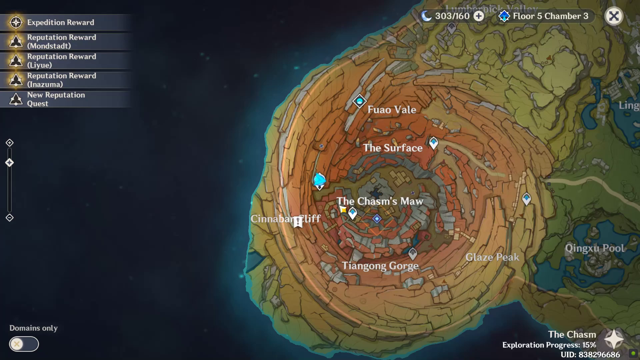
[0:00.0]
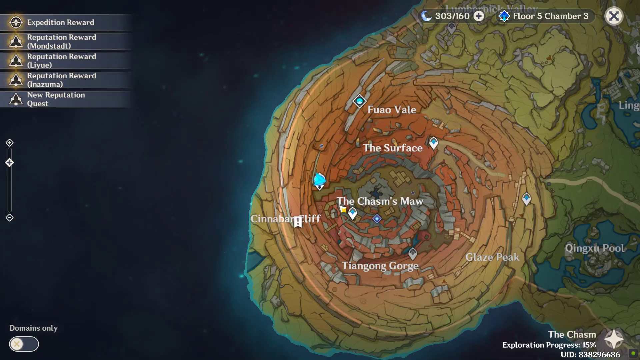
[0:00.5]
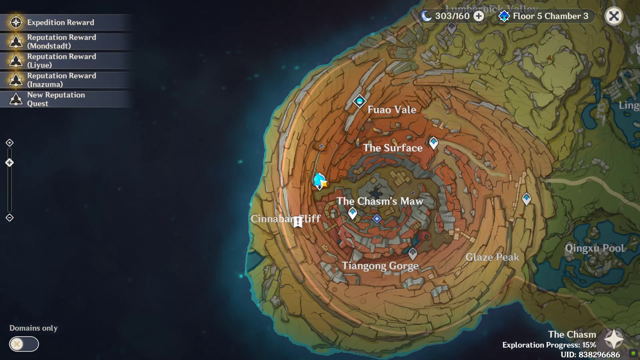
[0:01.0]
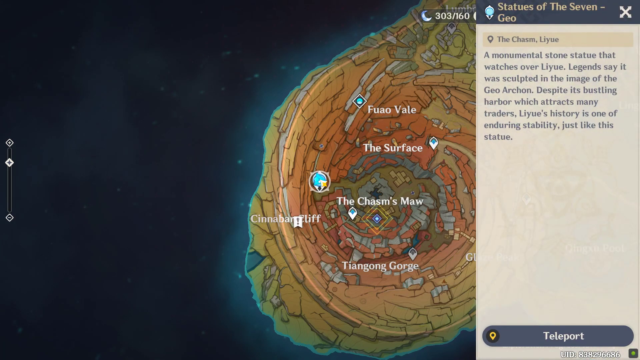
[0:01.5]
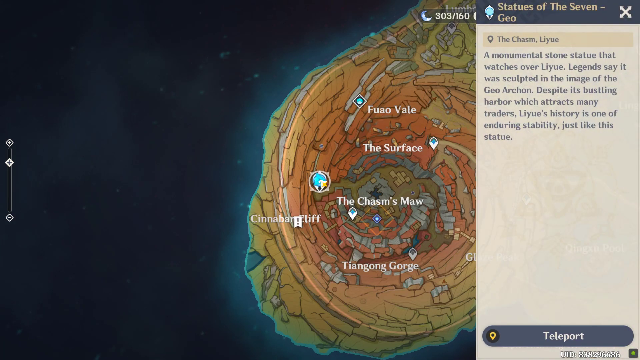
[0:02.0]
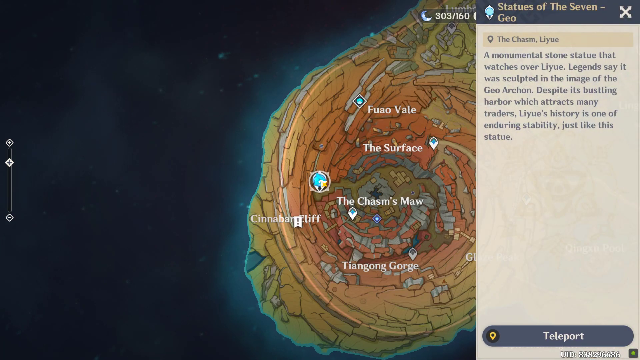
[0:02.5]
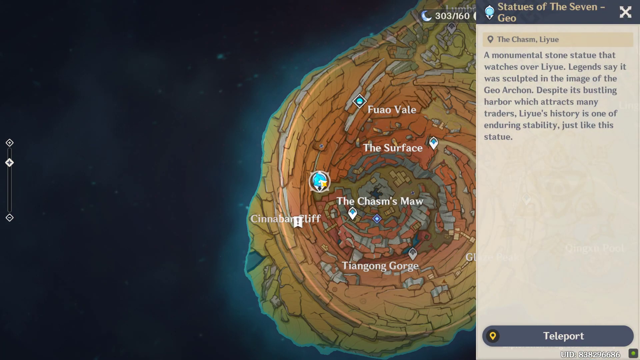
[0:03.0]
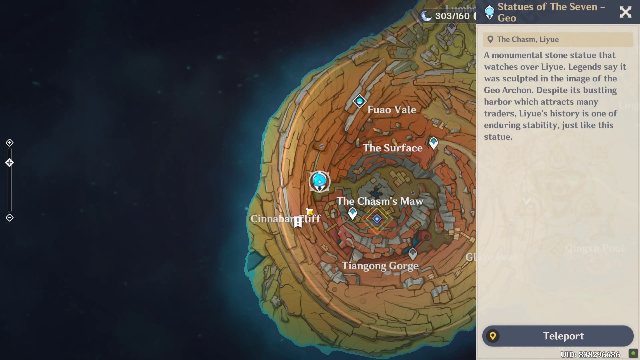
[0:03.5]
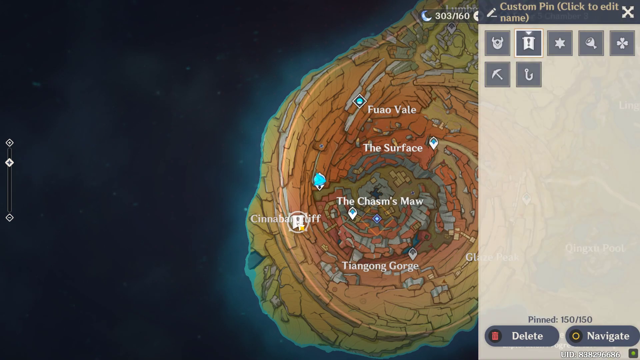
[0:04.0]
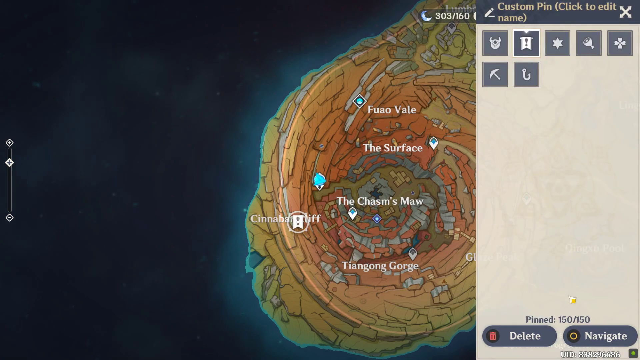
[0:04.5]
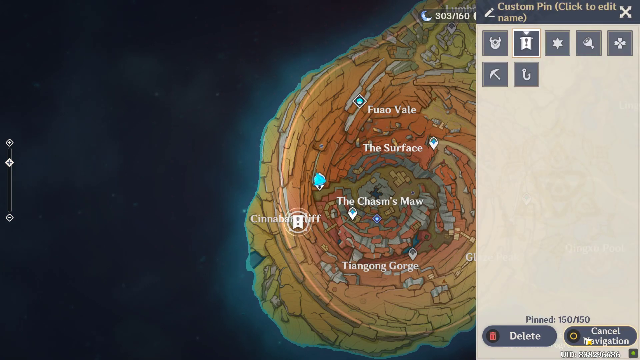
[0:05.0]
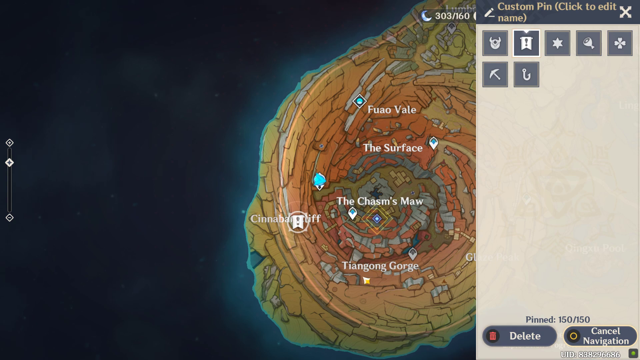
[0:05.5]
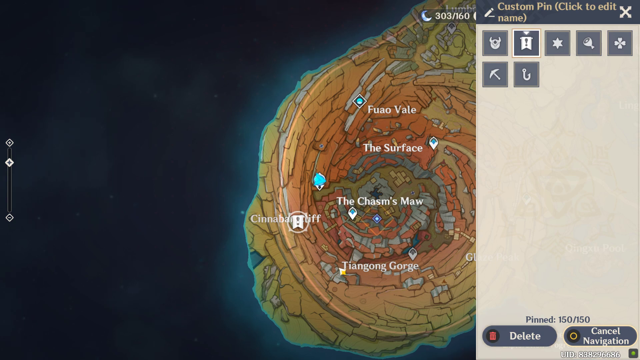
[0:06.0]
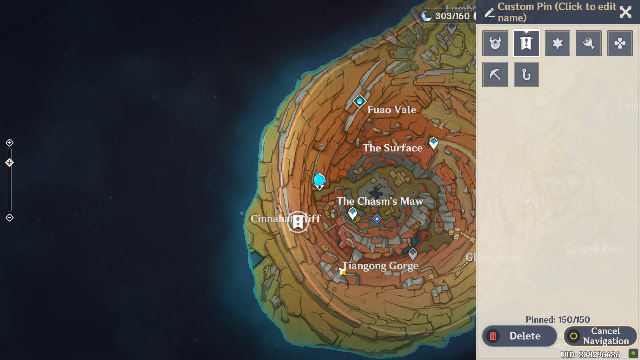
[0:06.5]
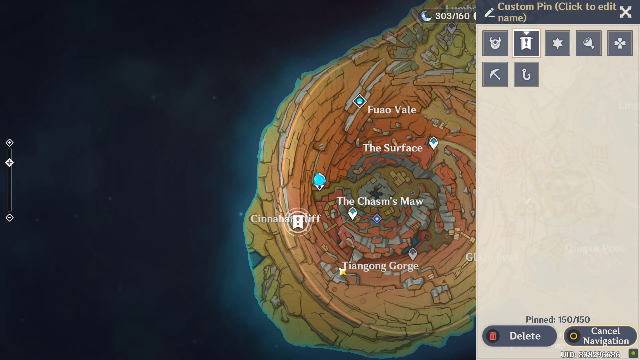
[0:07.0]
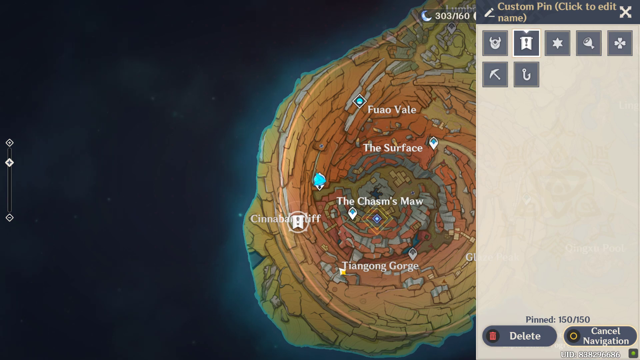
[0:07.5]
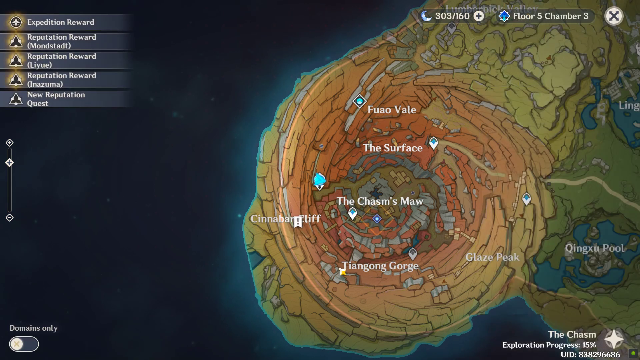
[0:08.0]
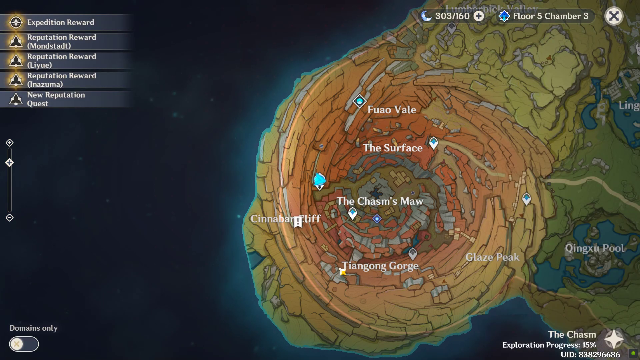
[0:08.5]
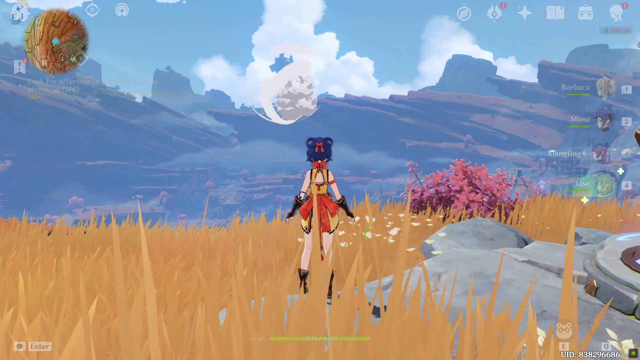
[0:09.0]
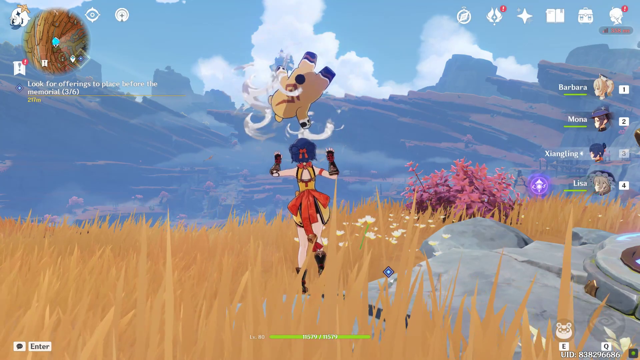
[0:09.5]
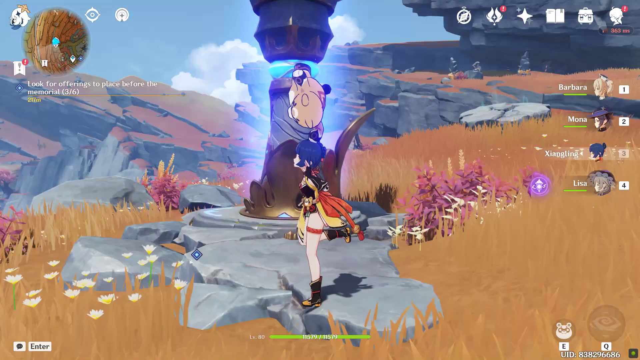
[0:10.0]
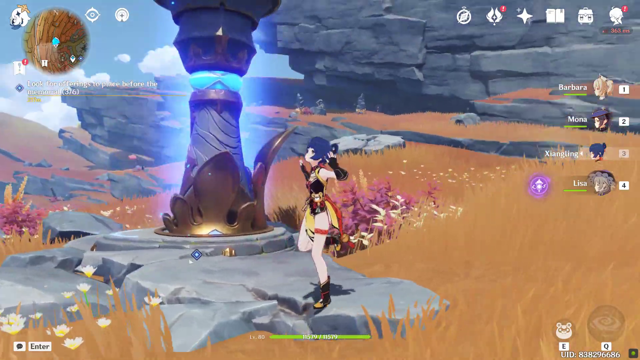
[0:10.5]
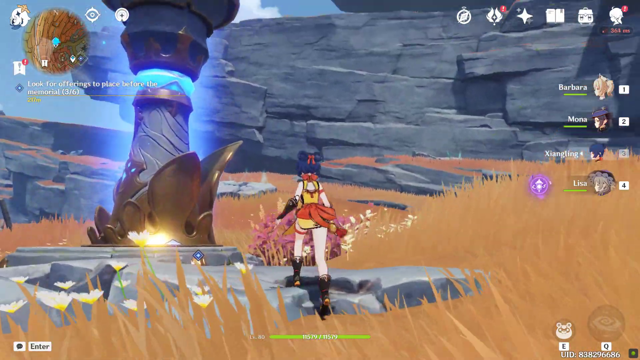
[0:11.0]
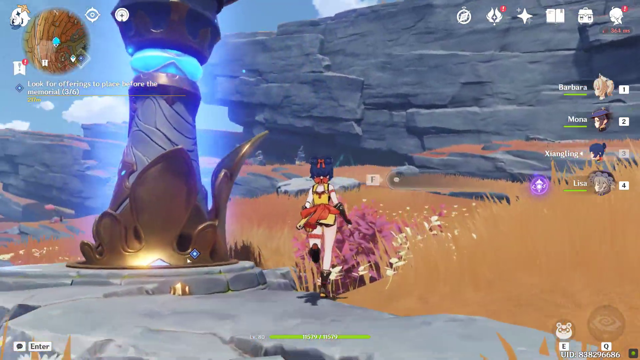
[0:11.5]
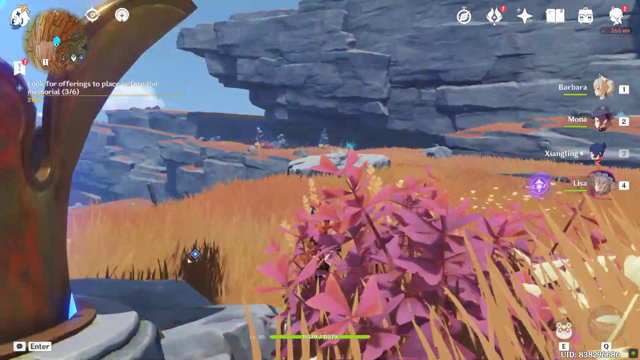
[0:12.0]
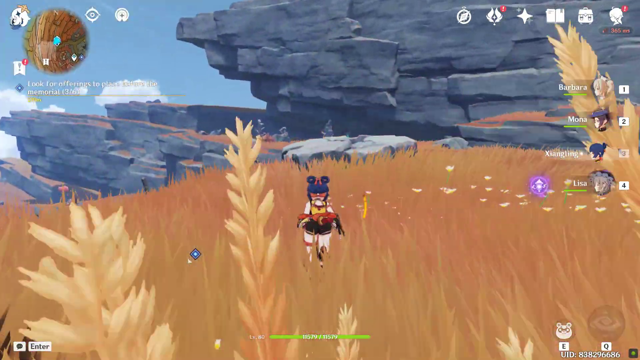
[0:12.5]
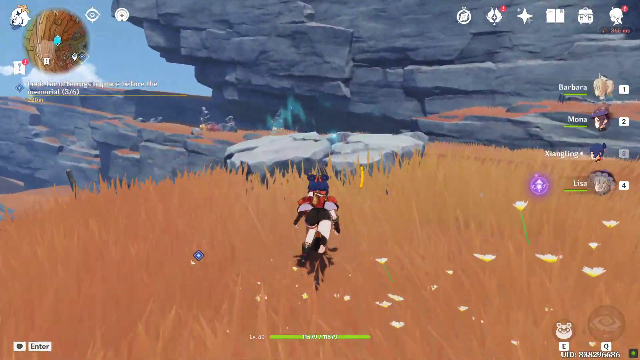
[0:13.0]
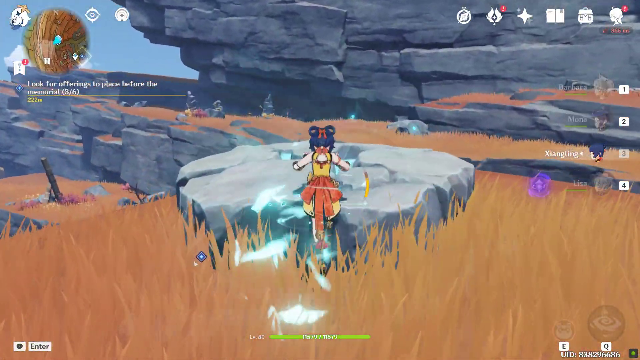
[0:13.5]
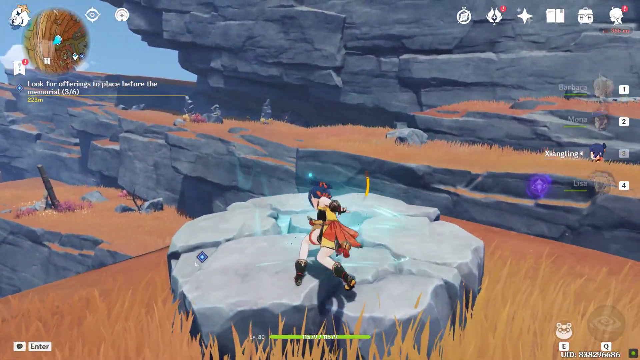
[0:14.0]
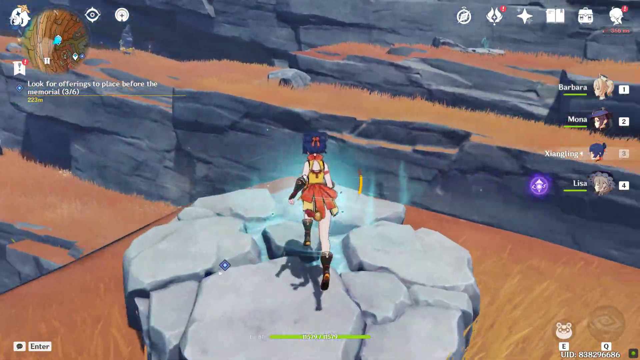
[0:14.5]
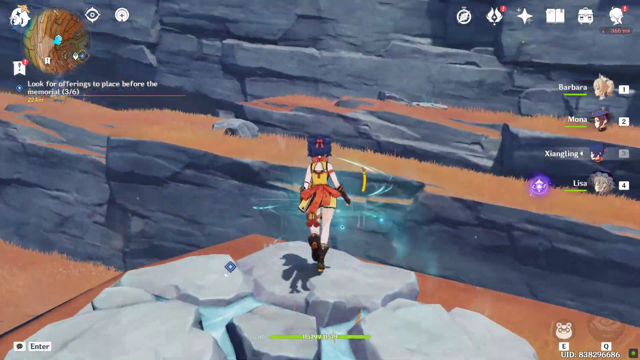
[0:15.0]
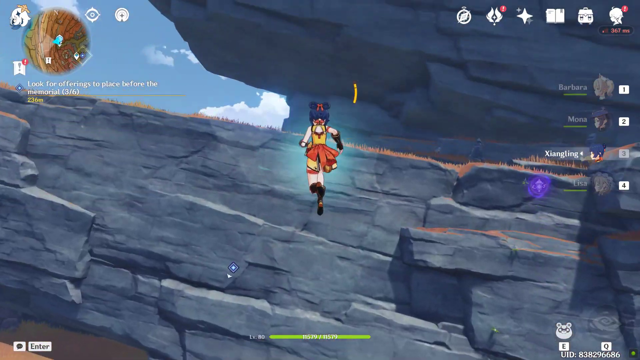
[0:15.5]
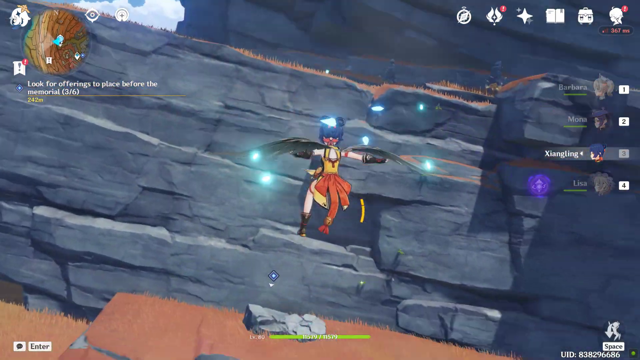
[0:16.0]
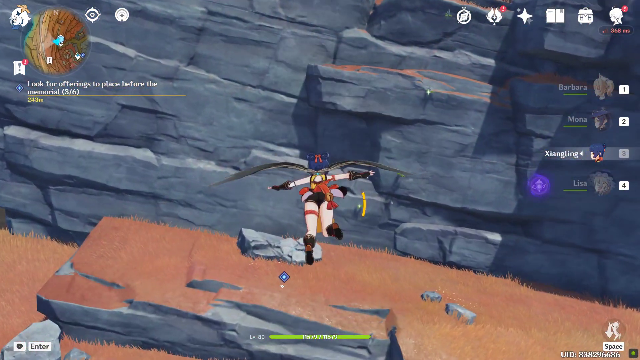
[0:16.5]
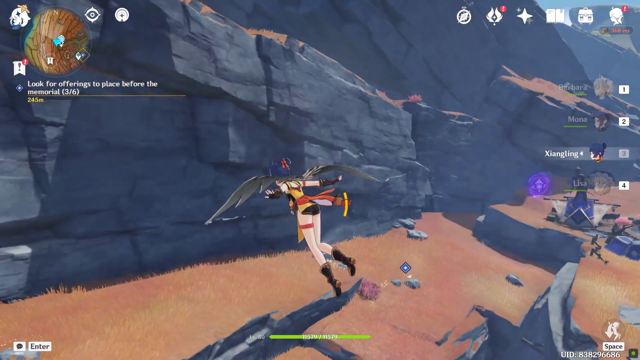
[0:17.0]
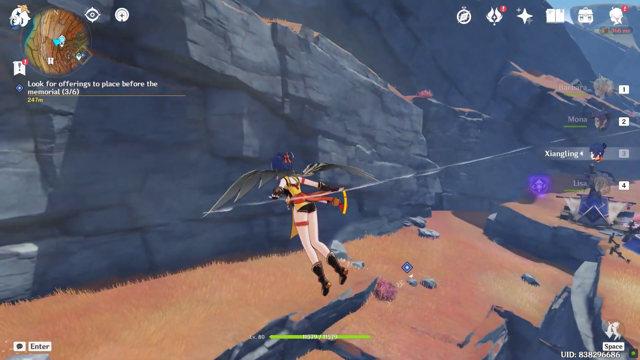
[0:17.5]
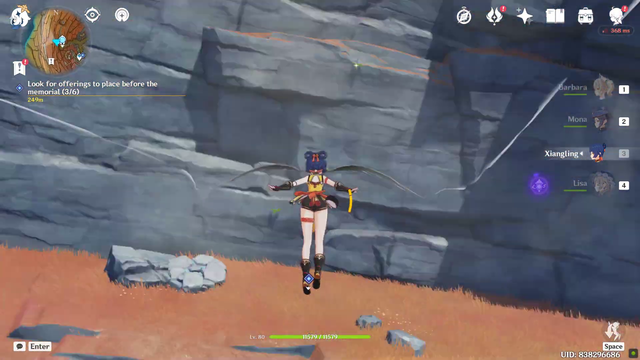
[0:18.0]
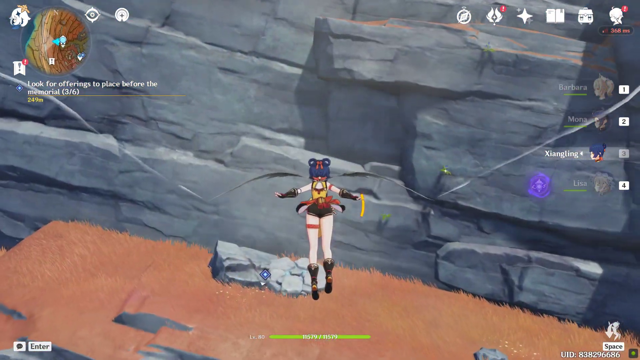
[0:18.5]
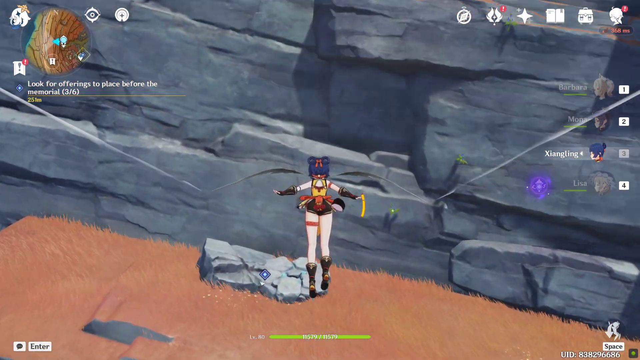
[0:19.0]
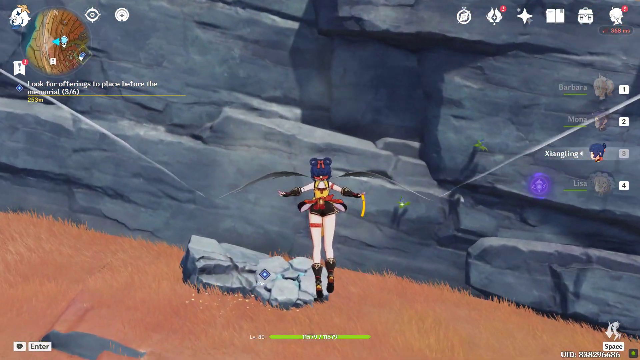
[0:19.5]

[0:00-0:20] The game appears to be some kind of long strategy game. It shows what looks like an overhead map of an area, with names of a fantasy-like land on it: "the Chasm's Maw", "Tiangong Gorge", "Cinnabar Cliff", "the surface" and "Fao Vale". On the right a pop-up reads "Statues of the Seven Geo" at the top, with a location of "the Chasm, Liyue" and the text "a monumental stone statue that watches over Liyue. Legends say it was sculpted in the image of the Geo Archon. Despite its bustling harbour, which attracts many traders, Liyue's history is one of enduring stability just like the statue." The screen then changes to read "custom pin, click to edit name", with seven icons that are apparently clickable, each with a different small picture: at the bottom right something that looks like a hook, then one that could be some kind of axe, one that looks like a flower, a piece of meat, a star, a banner and a helmet.